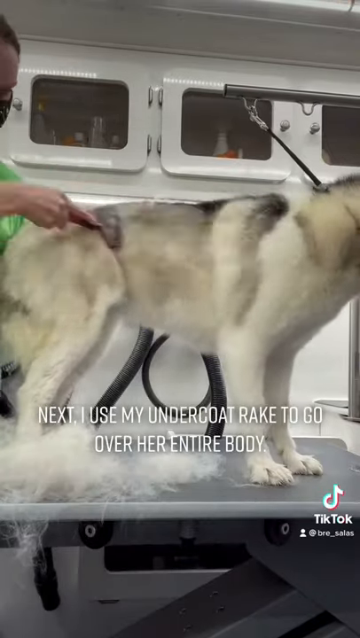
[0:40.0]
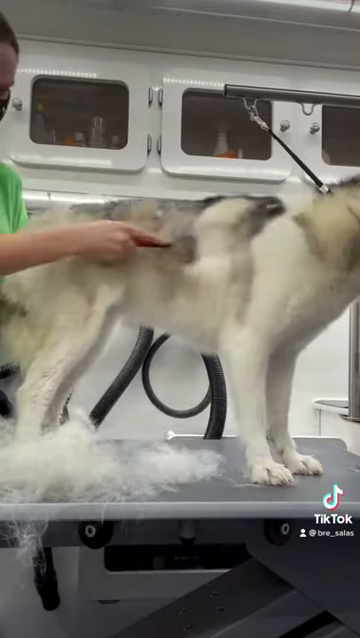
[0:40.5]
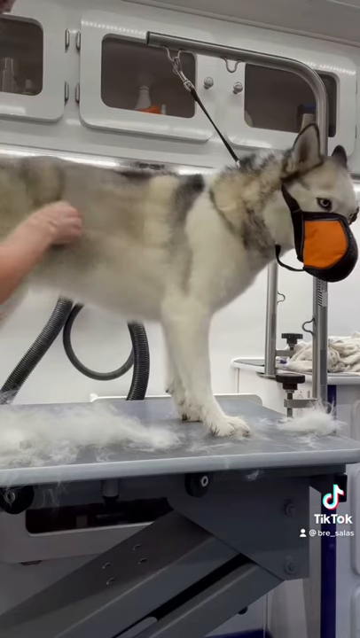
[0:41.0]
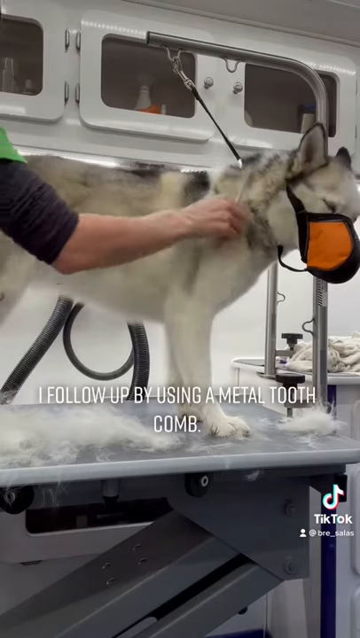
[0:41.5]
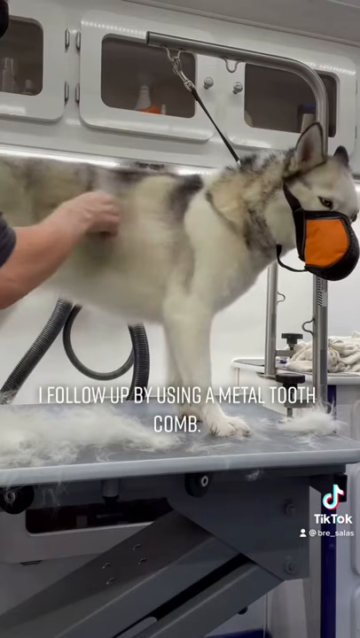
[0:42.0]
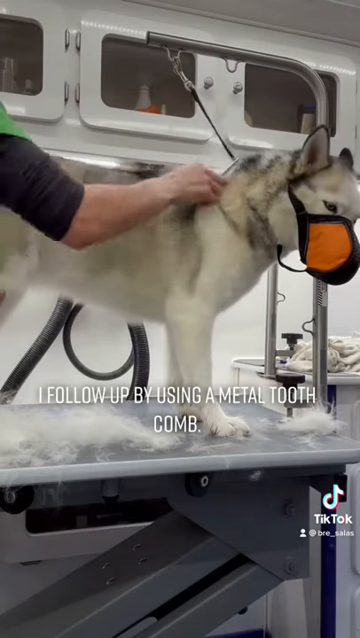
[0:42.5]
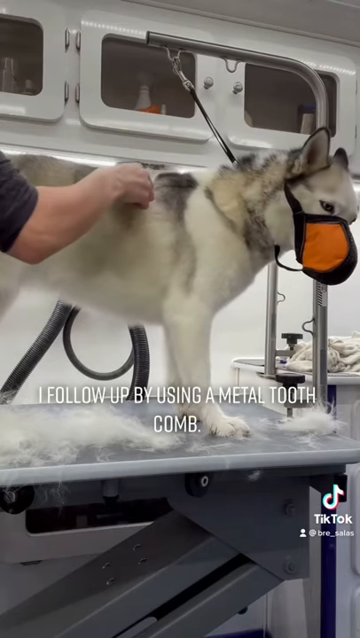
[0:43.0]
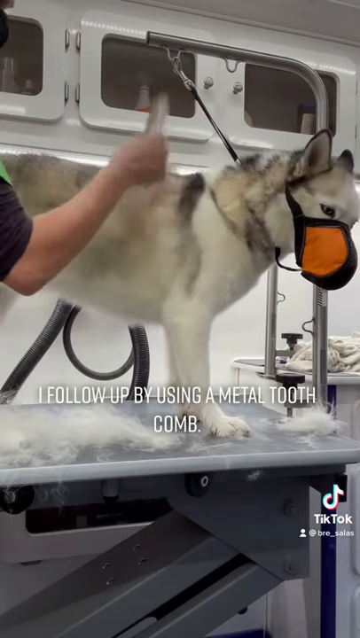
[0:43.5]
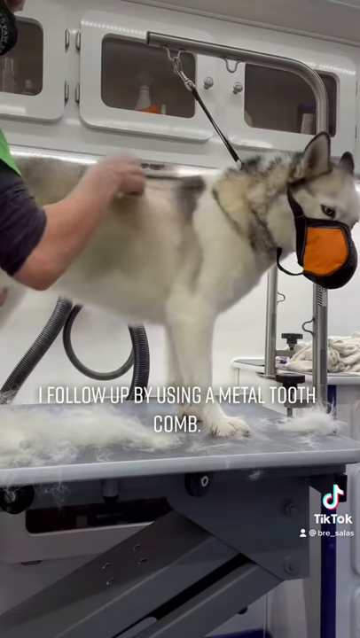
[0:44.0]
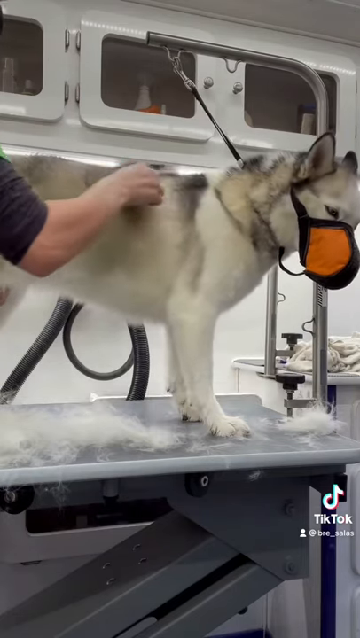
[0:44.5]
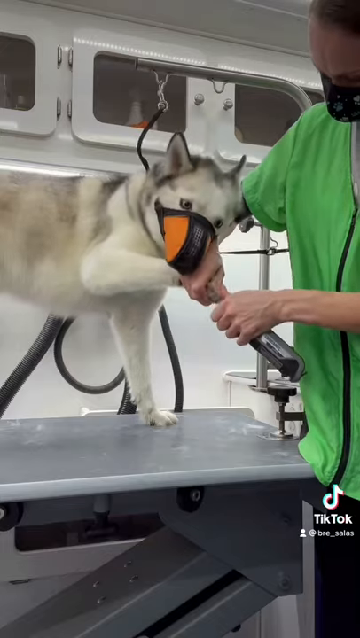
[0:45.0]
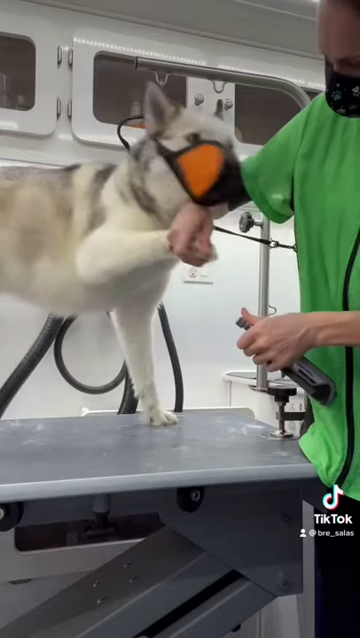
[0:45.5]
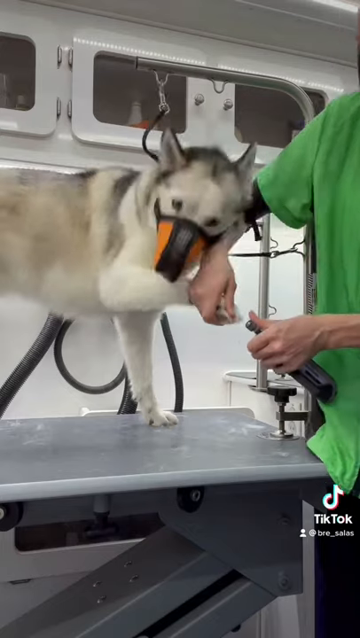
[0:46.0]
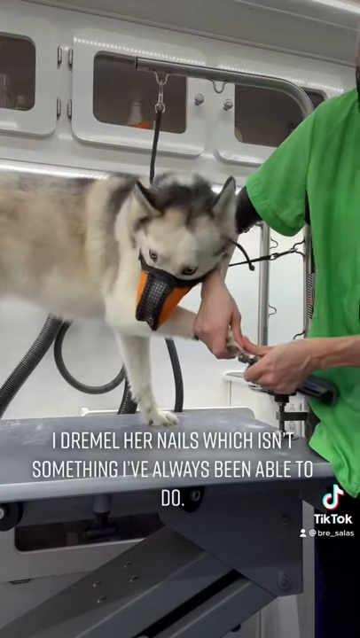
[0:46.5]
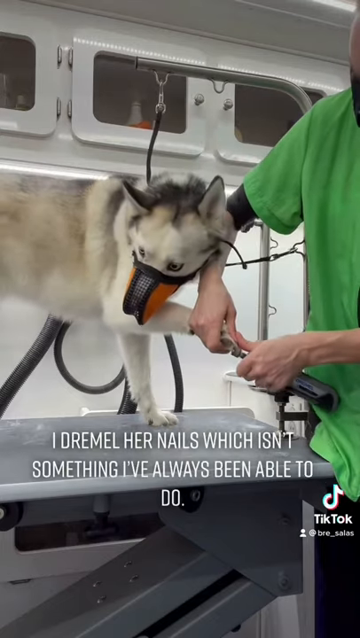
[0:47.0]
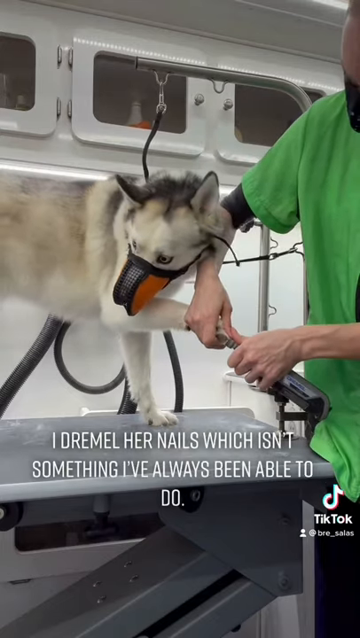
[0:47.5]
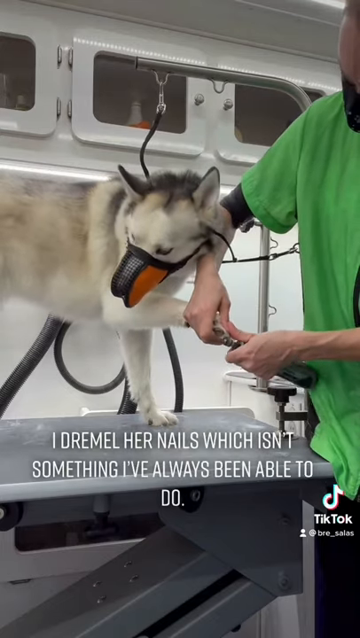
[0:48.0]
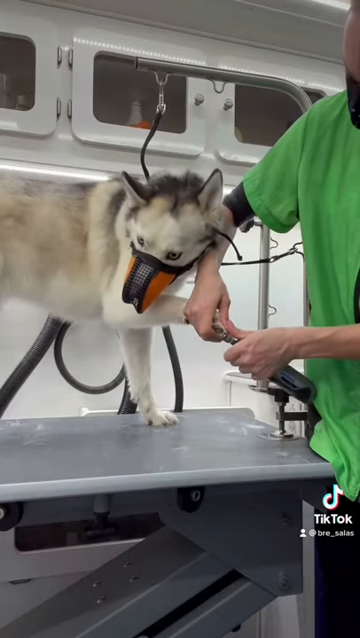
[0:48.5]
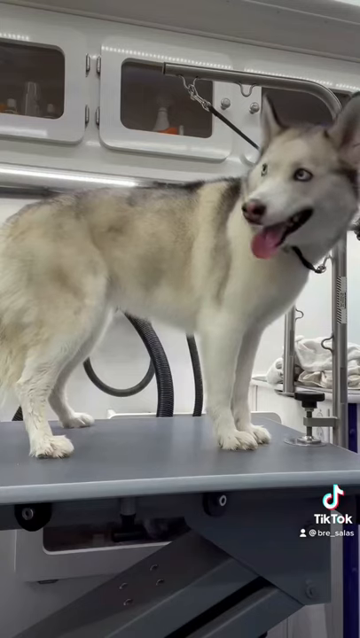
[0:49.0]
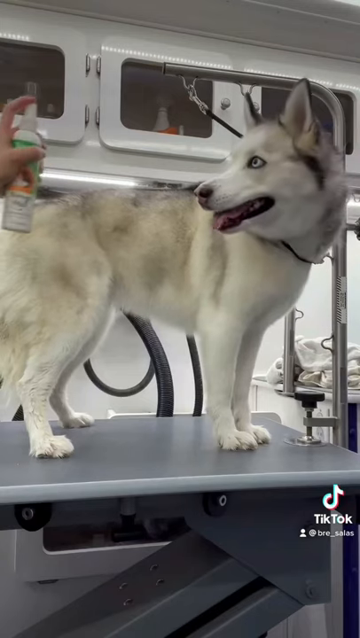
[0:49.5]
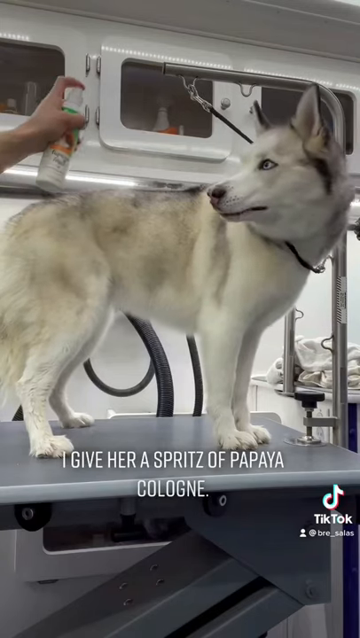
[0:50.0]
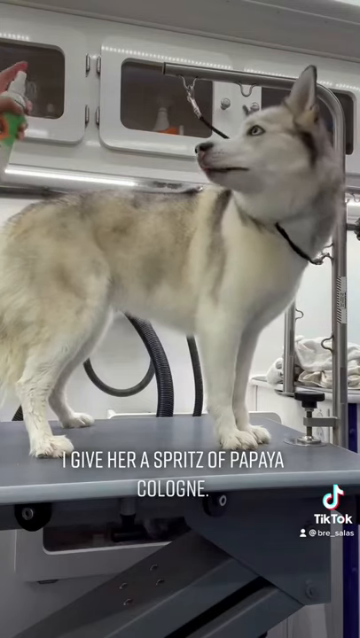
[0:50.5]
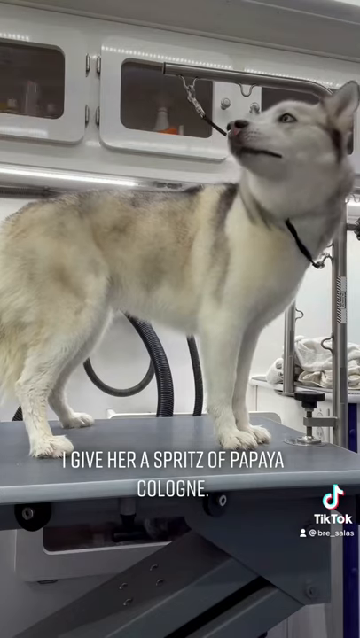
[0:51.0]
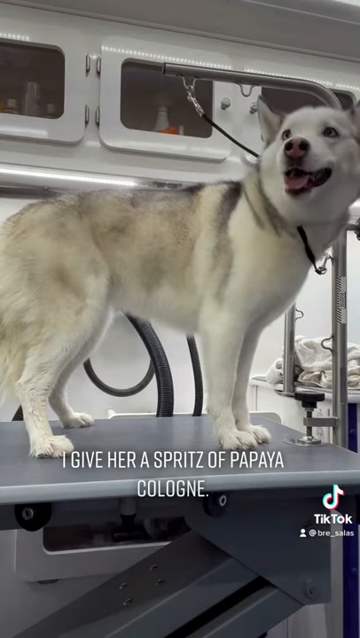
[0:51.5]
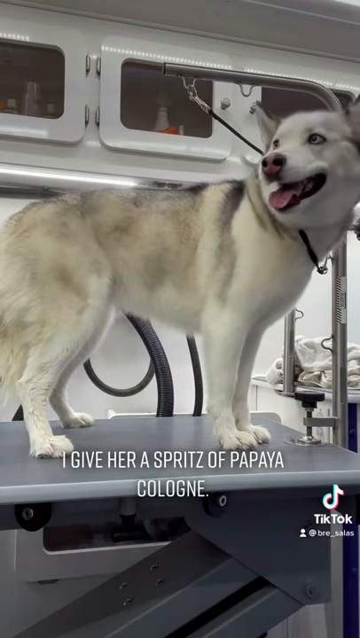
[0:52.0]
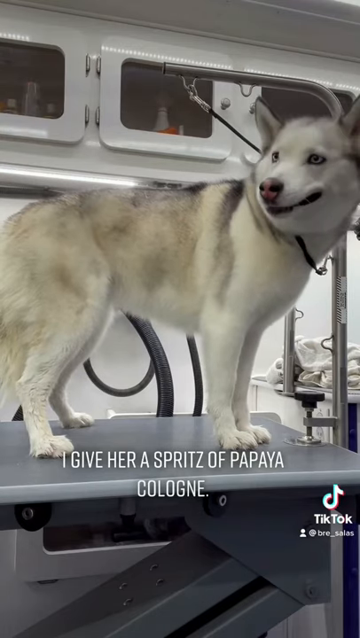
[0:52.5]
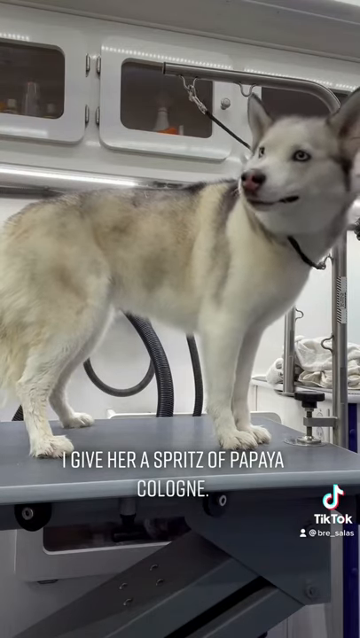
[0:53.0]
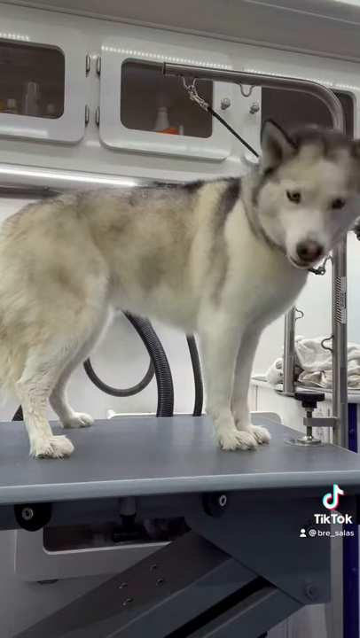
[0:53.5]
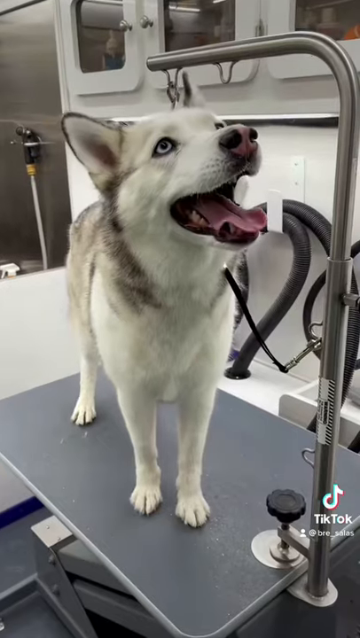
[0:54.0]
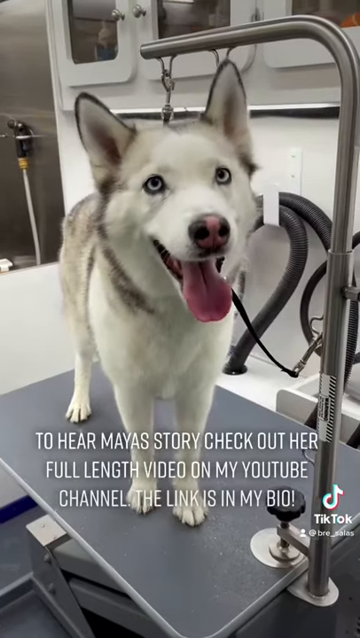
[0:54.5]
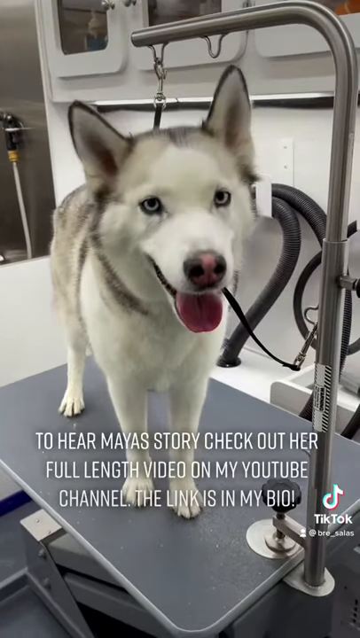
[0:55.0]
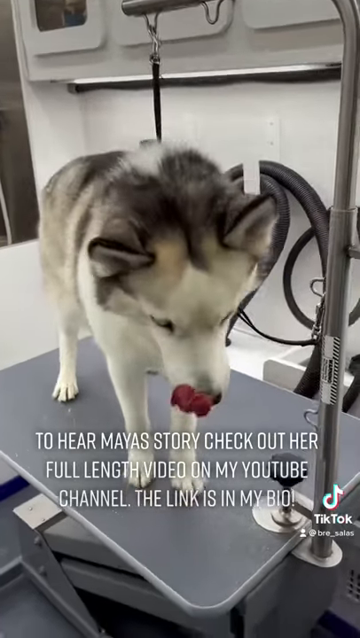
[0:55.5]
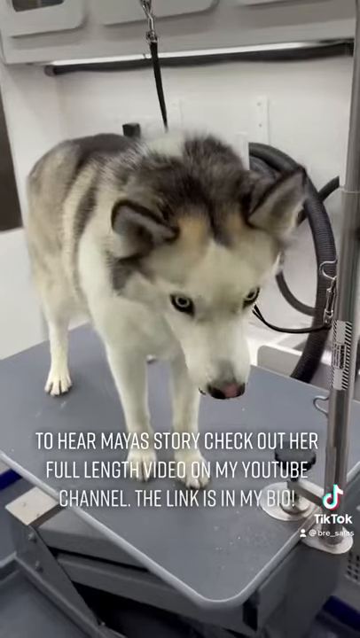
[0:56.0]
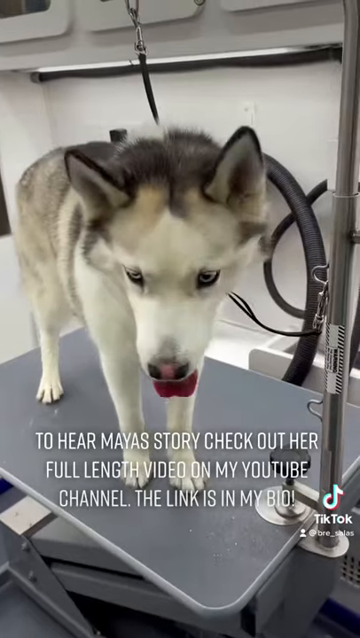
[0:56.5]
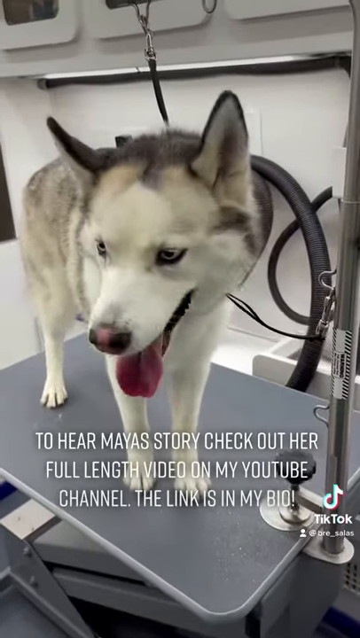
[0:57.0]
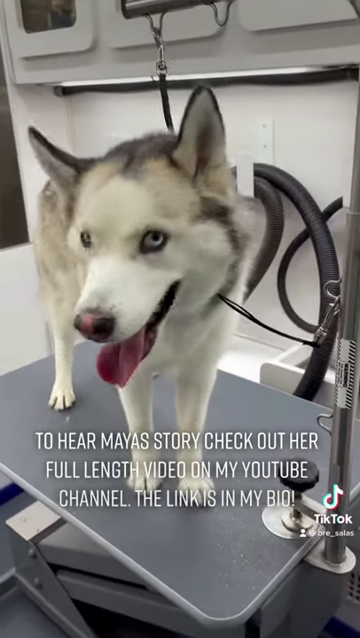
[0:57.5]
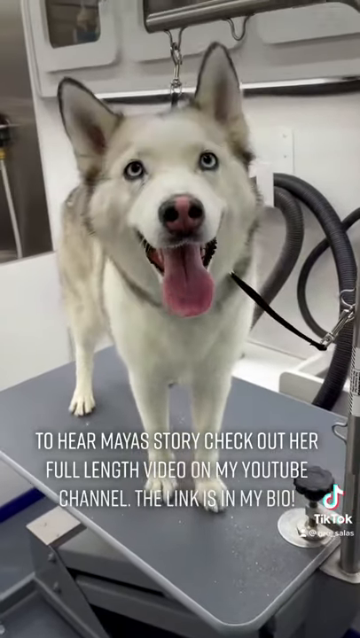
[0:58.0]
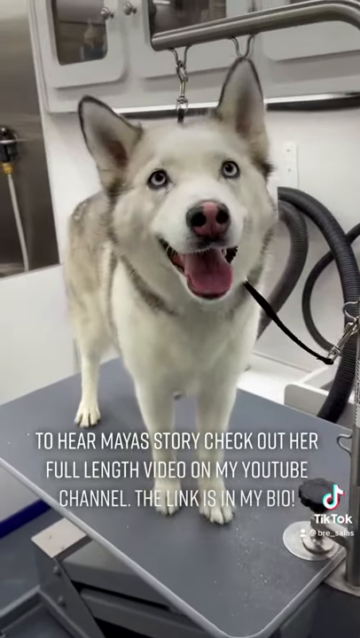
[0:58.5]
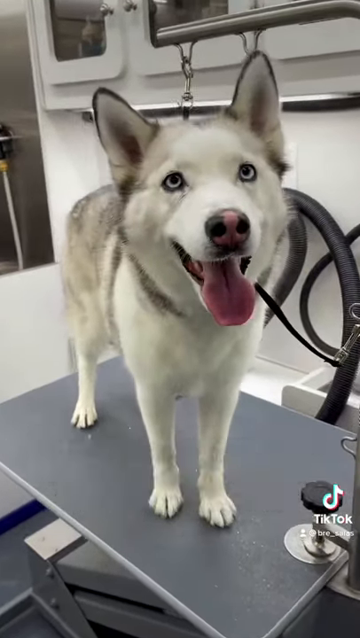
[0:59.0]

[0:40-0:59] The Siberian husky is groomed with a slicker brush, and much of its thick fur has been removed. The dog is not bare; its thick coat has simply been trimmed down significantly, and the difference shows in both its coat and its demeanor. For the most part the dog looks content and stands calmly through the grooming. Shots of the groomer appear with words that move by swiftly. At the very end, the dog is spritzed with a cologne called paprika cologne and looks happy about it.